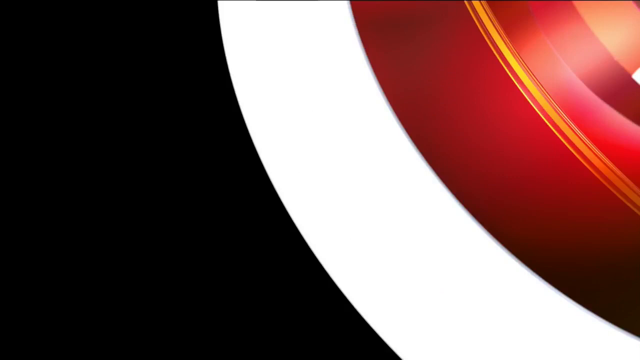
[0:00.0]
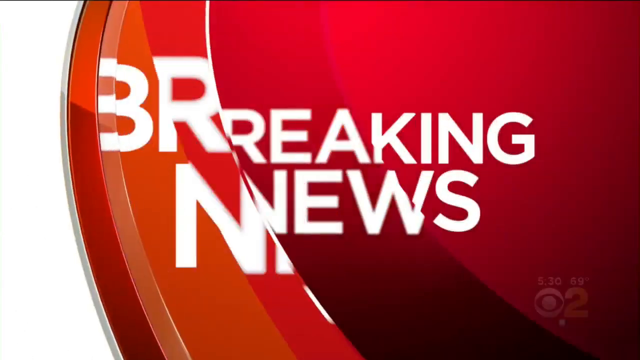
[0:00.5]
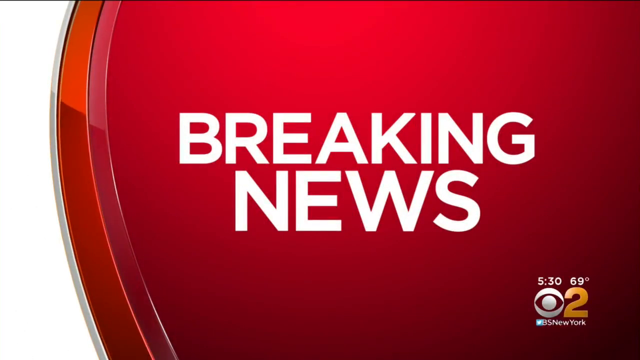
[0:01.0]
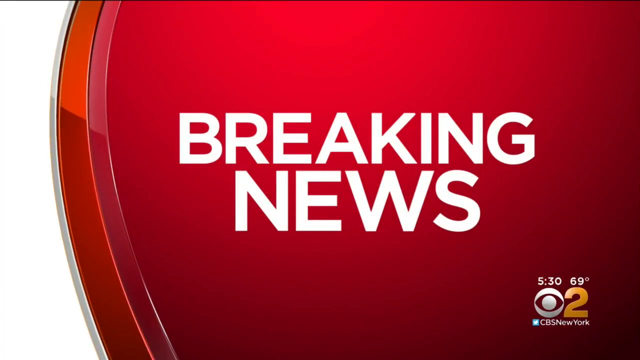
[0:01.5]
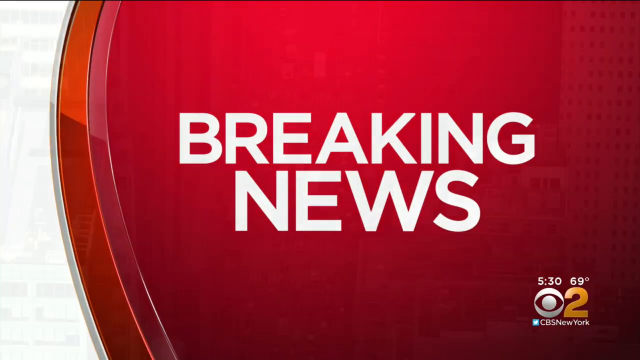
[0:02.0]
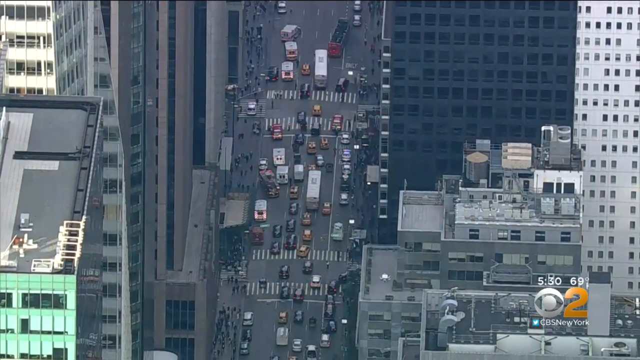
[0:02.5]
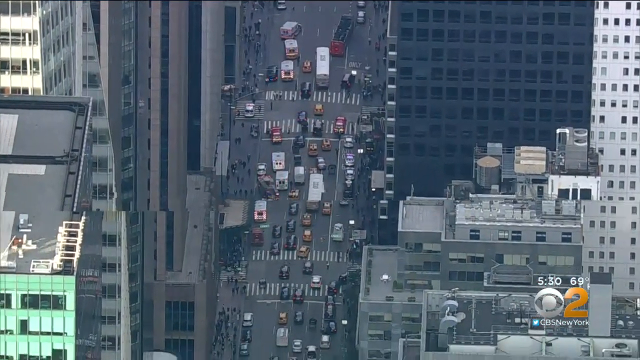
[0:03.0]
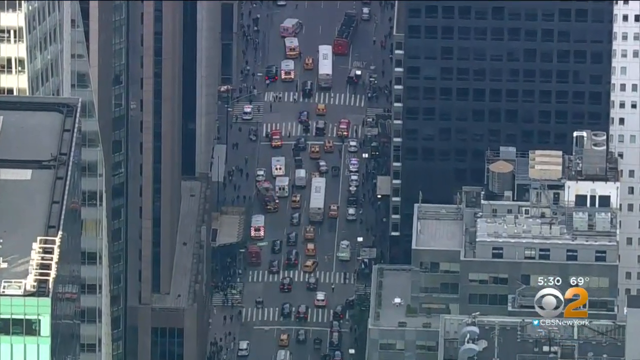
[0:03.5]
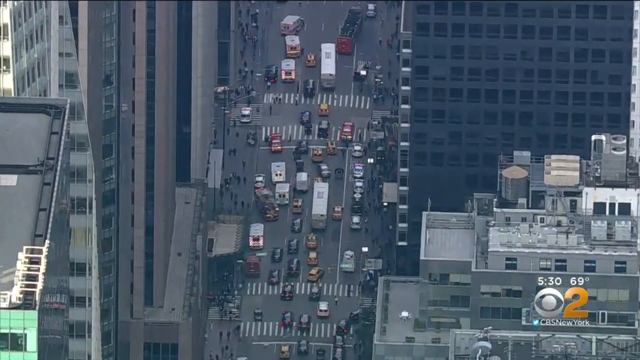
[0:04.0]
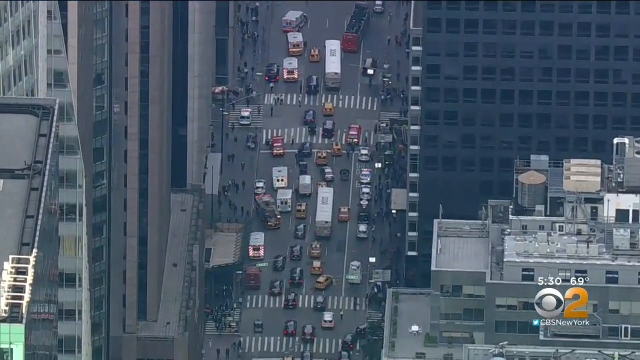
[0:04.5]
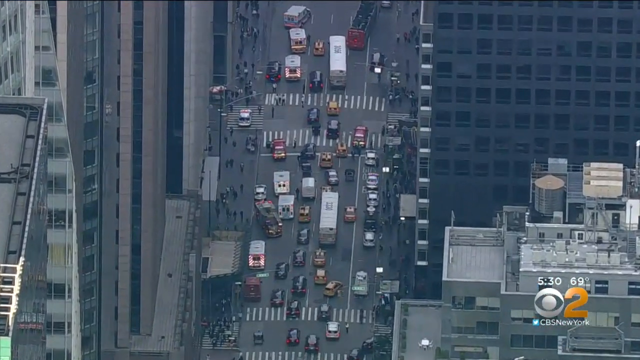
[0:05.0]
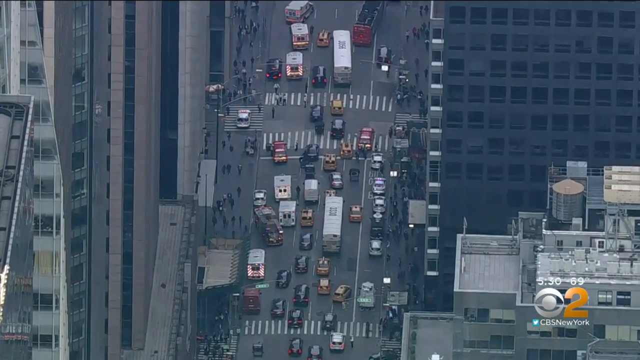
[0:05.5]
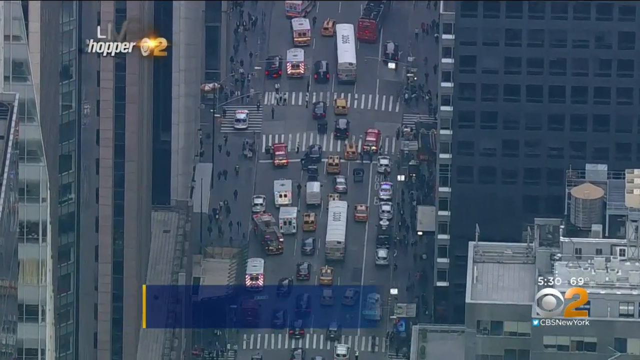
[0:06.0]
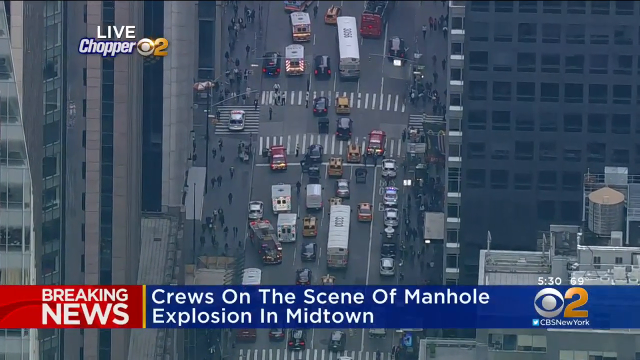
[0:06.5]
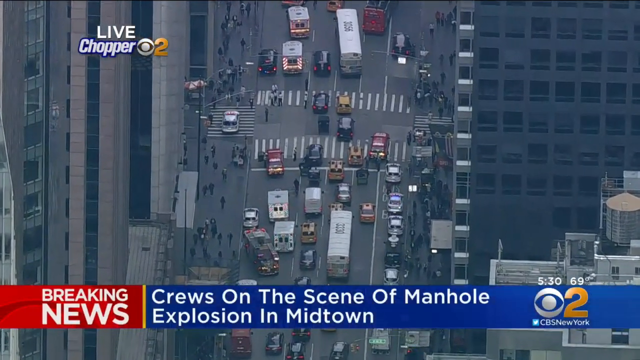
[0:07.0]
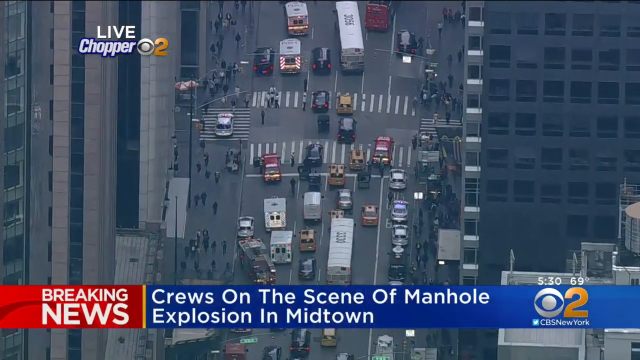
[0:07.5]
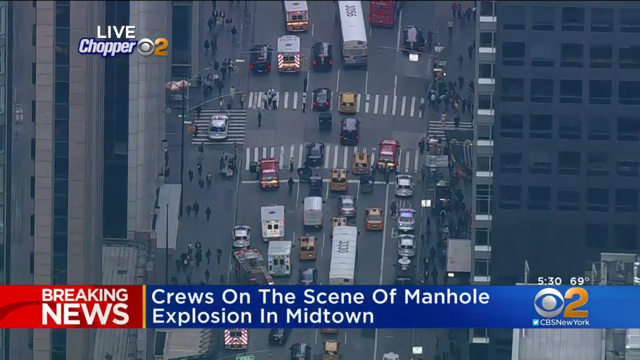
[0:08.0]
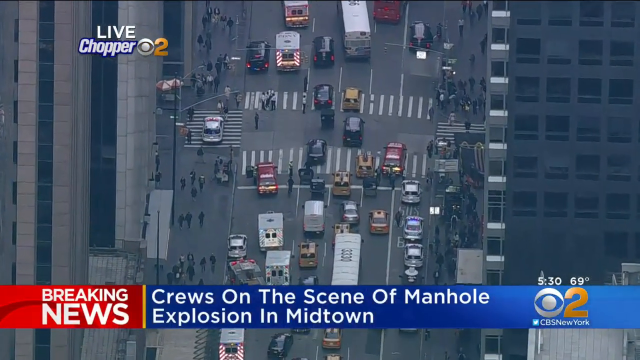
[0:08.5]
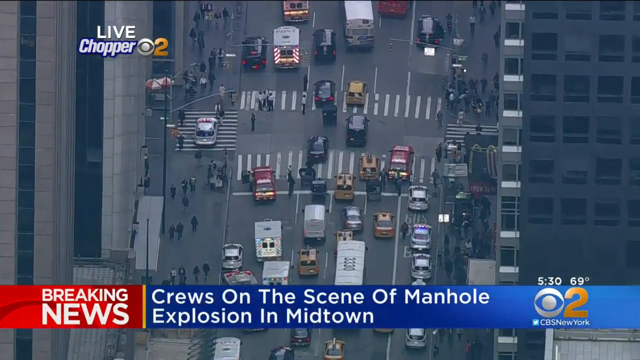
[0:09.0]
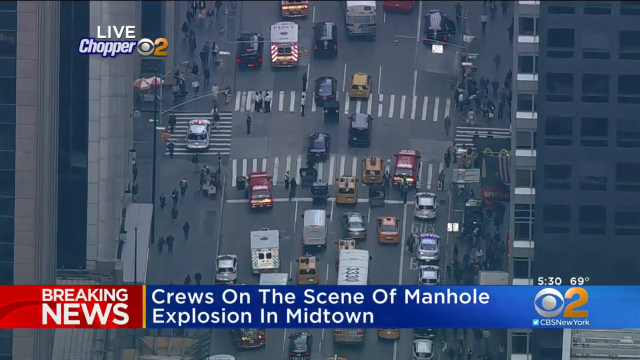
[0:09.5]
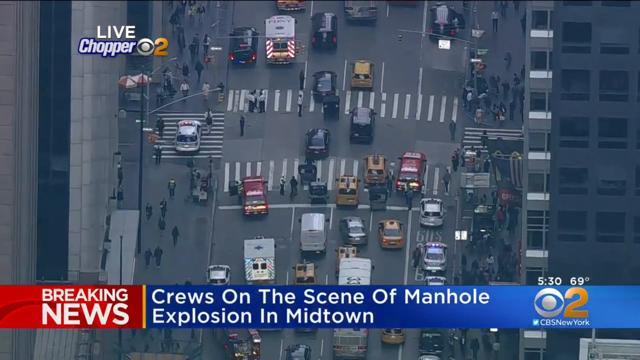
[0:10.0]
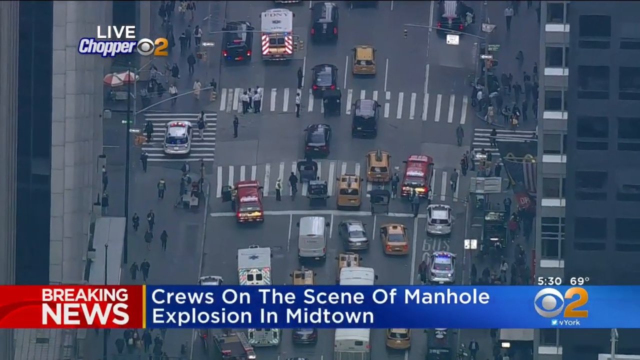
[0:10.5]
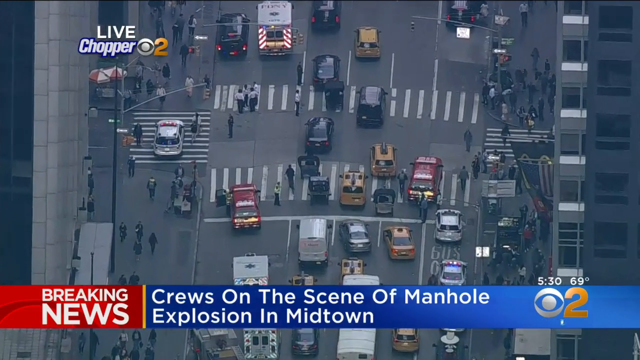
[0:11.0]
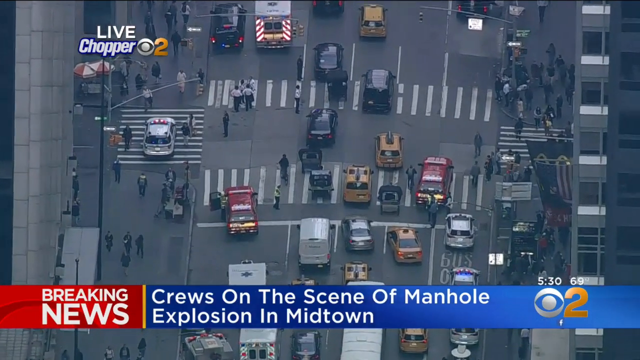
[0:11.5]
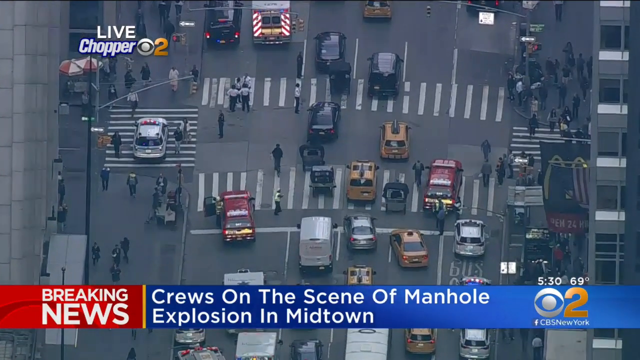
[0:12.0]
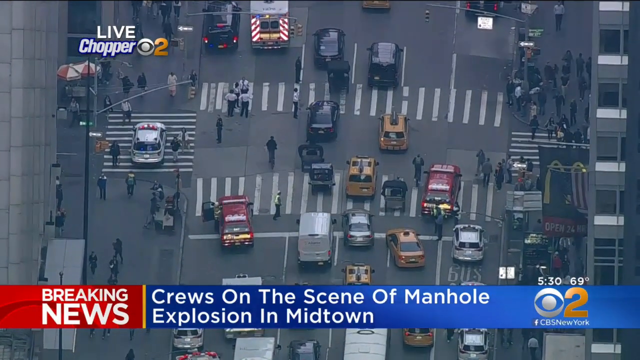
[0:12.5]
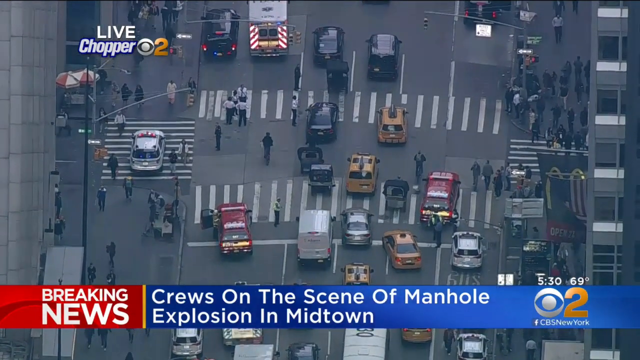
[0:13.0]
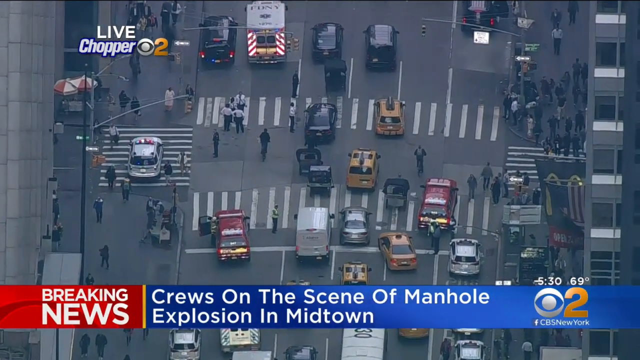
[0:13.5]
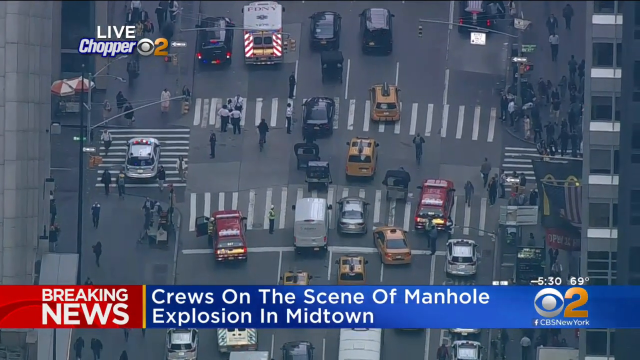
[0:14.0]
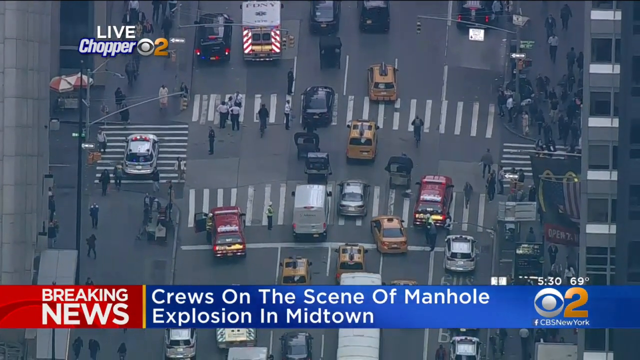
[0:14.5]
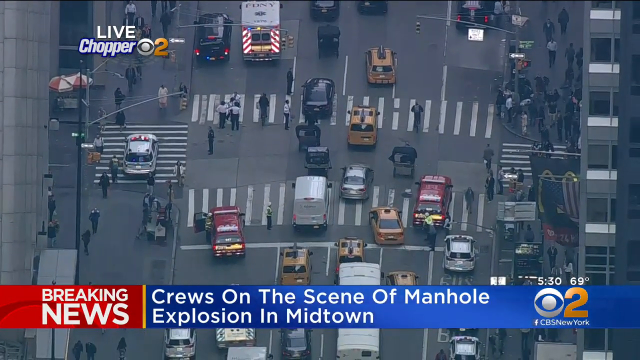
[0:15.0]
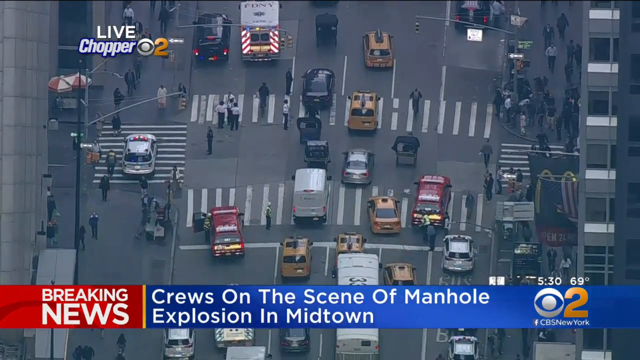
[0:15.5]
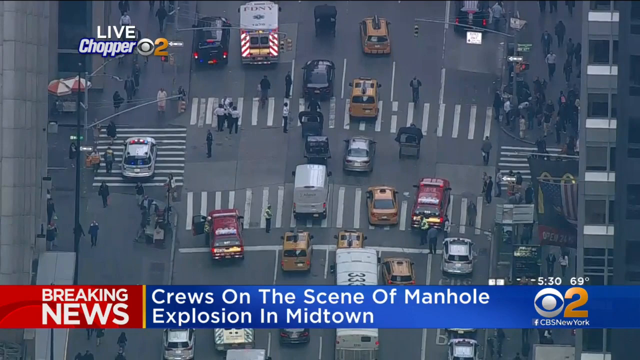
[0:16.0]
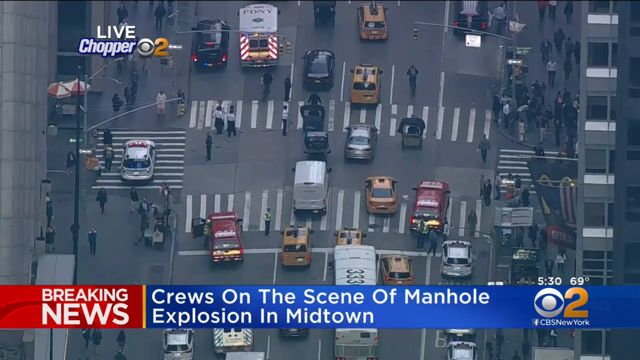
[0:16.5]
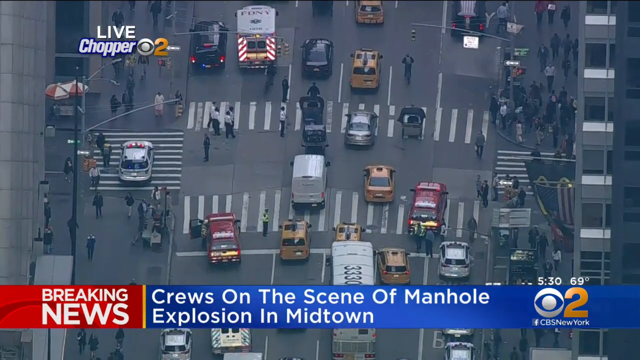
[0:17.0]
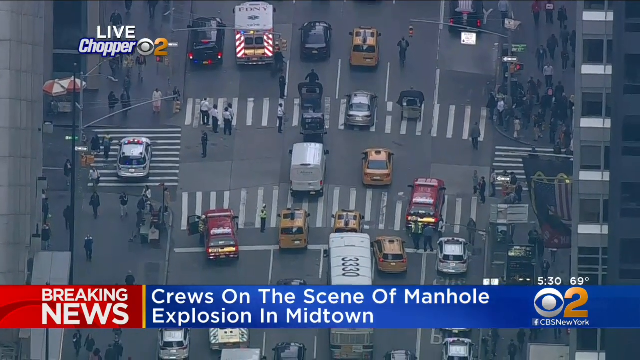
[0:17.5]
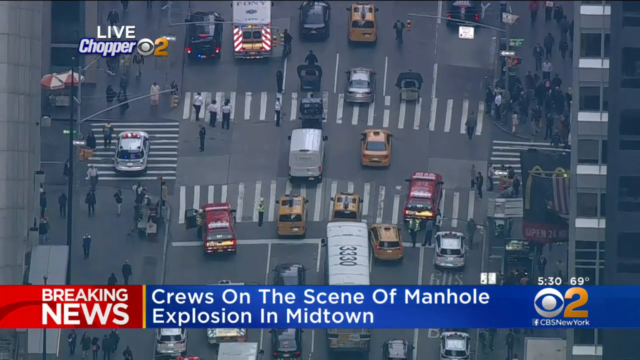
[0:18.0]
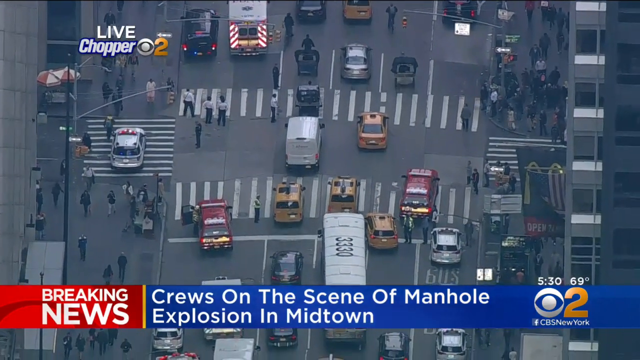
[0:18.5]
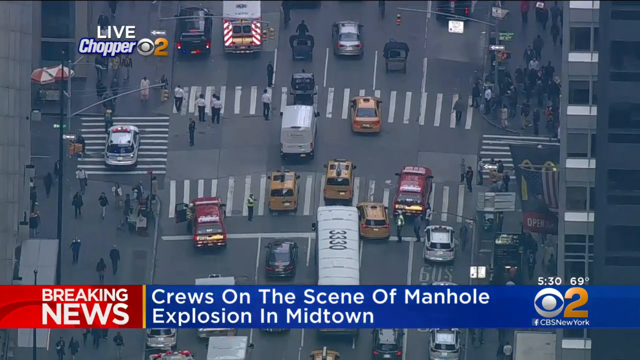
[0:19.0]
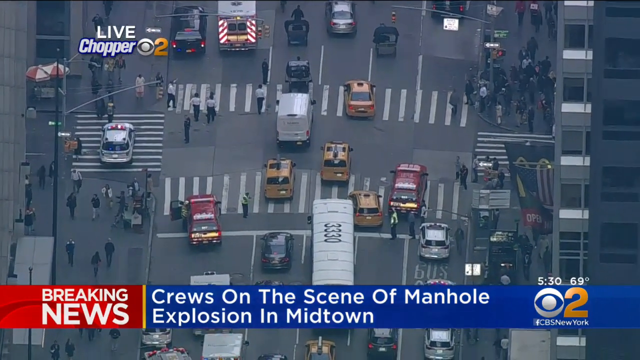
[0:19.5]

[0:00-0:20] The video opens on a red screen with white all-caps text reading "BREAKING NEWS." It cuts to footage of a busy New York City street where multiple cars, ambulances, and police cars drive slowly and cautiously. A blue and red news banner at the bottom of the screen reads "BREAKING NEWS CREWS ON THE SCENE OF MANHOLE EXPLOSION IN MIDTOWN" alongside a CBS 2 New York logo, and an icon in the top left reads "LIVE CHOPPER" with the CBS 2 logo. The Midtown street appears to be the scene of an accident, with many ambulances, police cars, and some red fire patrol cars. Many pedestrians walk on the sidewalks flanking the street. Taxis and cars are led through the middle of the street, while police cars and other first responders are in the street, with first responders standing there controlling traffic.